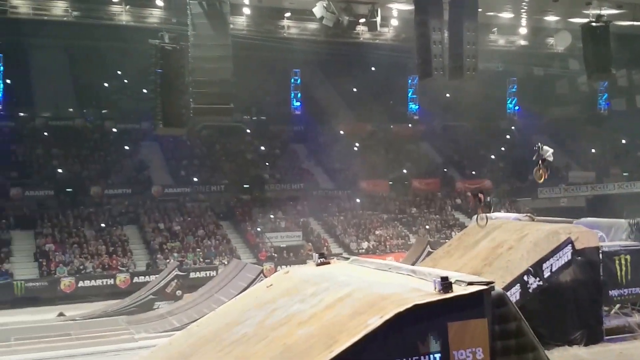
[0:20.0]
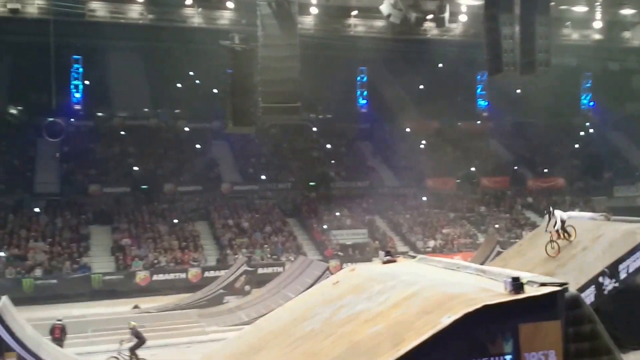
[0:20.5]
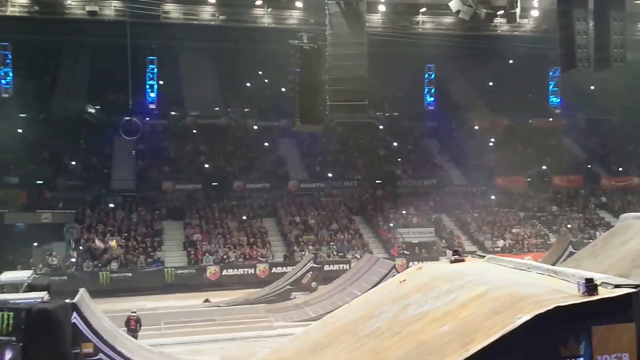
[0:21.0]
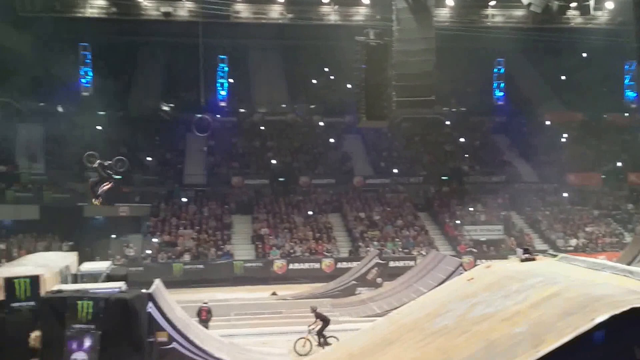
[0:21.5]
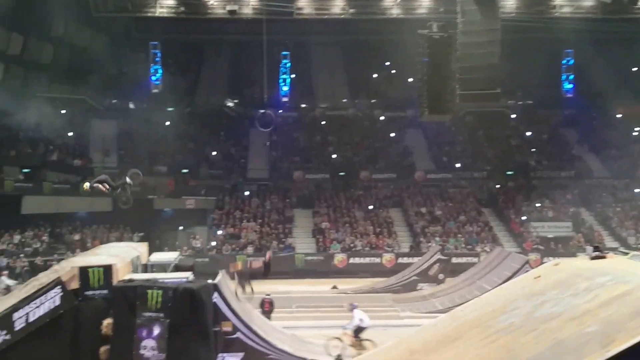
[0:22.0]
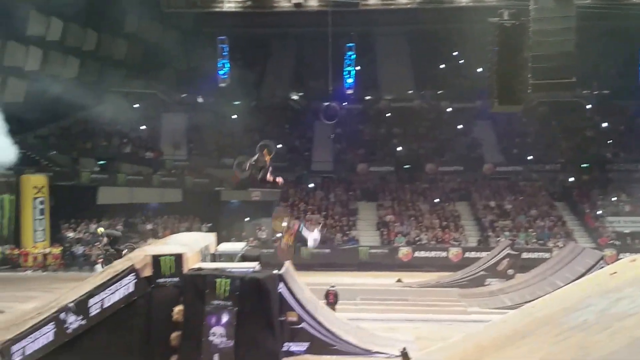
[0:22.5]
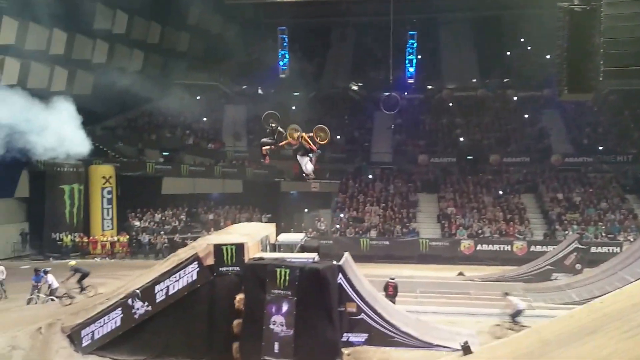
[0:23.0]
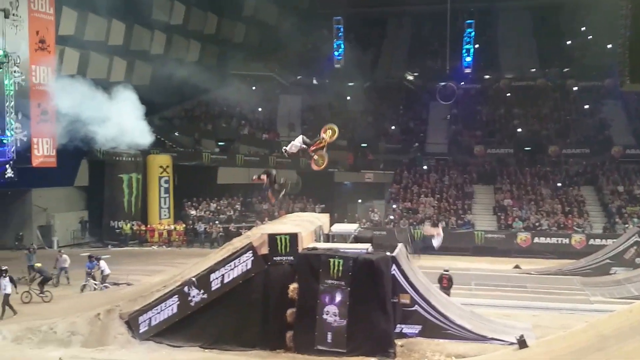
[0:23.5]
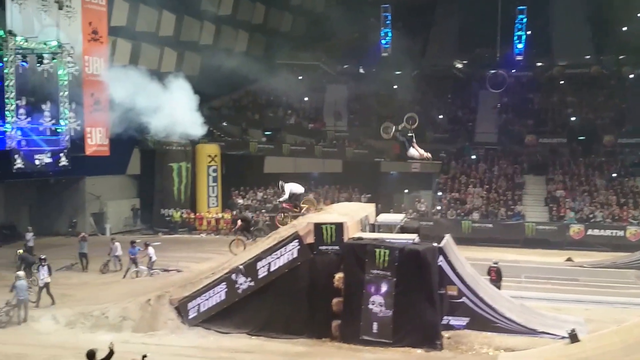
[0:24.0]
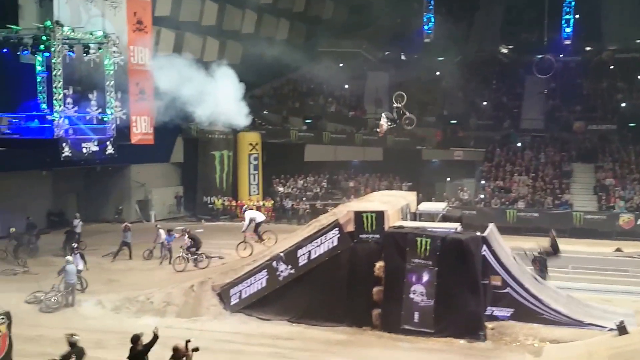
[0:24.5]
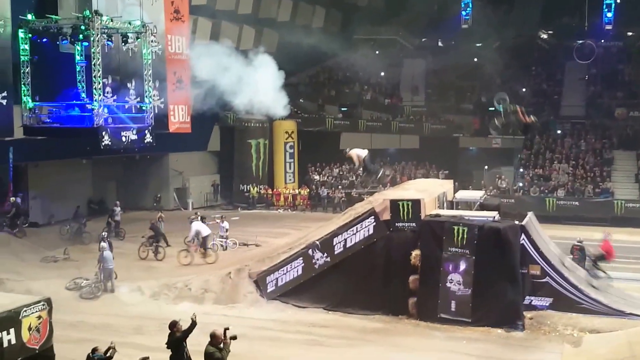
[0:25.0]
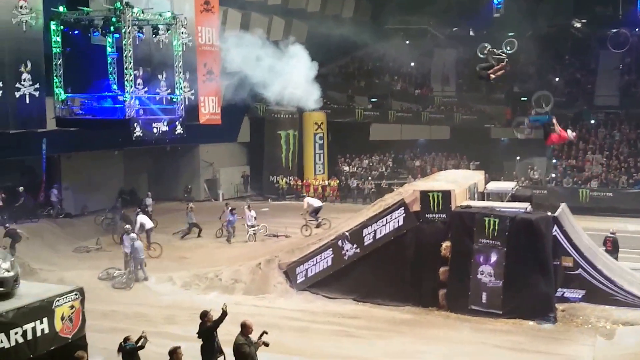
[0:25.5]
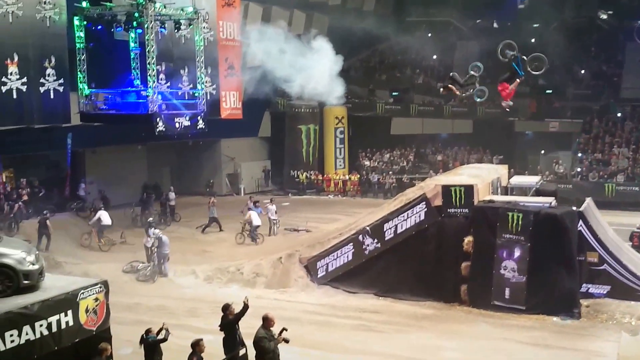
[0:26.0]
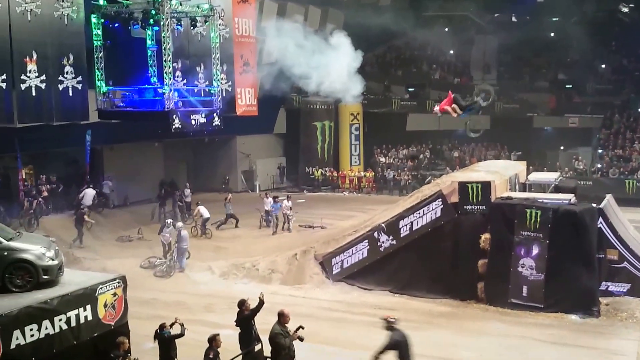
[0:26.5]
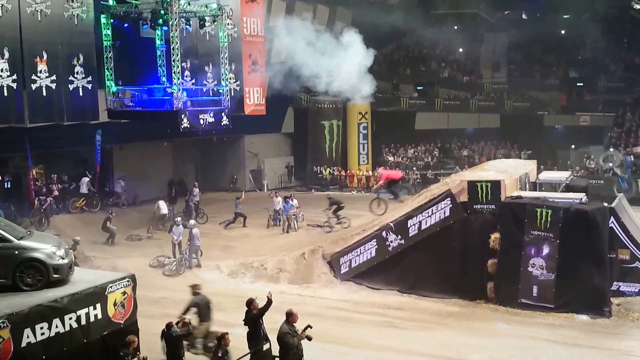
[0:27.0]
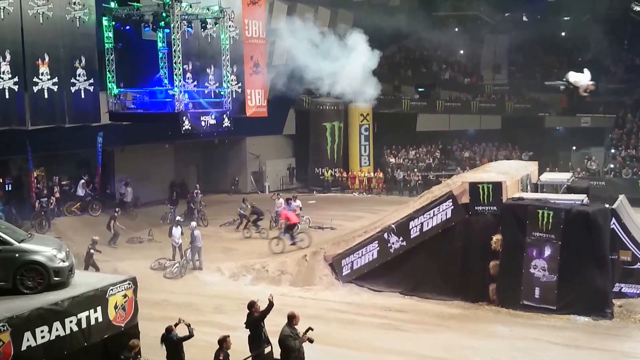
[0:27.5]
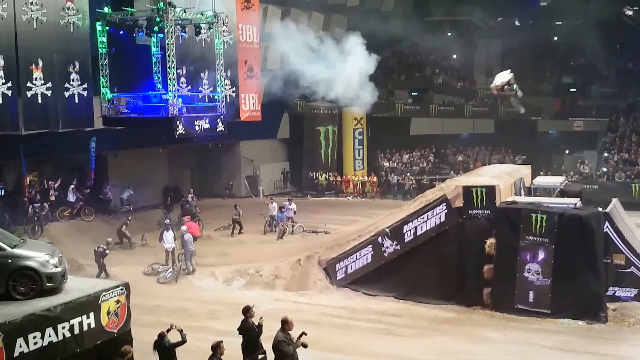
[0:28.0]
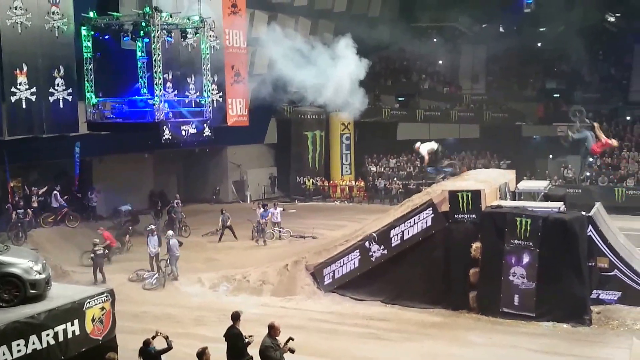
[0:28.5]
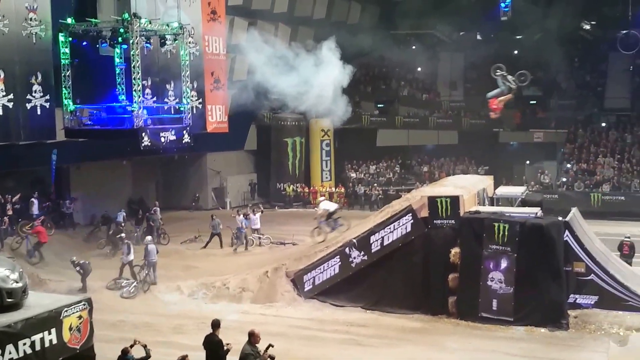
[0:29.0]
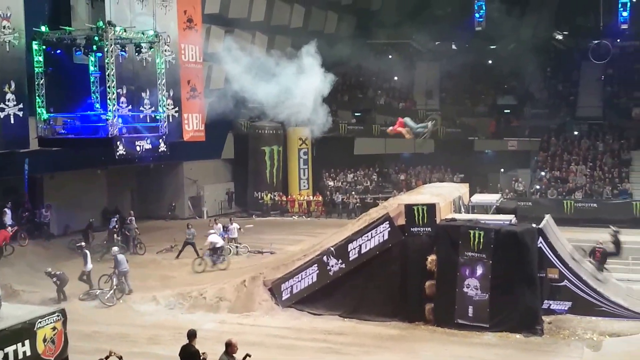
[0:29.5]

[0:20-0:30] The performance continues, and some of the riders are on bicycles, so a variety of vehicles, including bicycles, motorcycles and a snowmobile, go over the series of ramps. Each rider performs stunts and tricks, most often a backflip, along with other unidentified tricks. After going over the ramp and landing their trick, the riders generally pull off to the side and wait for the other riders in their group to go through before moving on to a different part of the show for the audience.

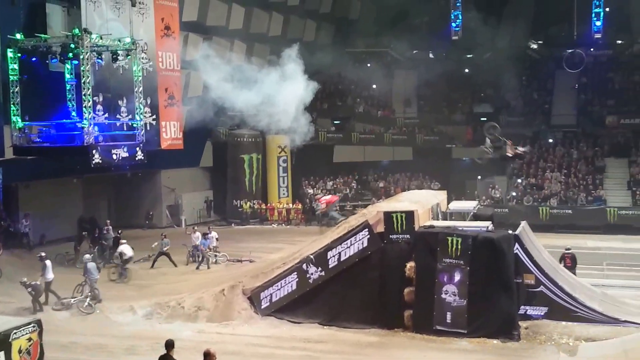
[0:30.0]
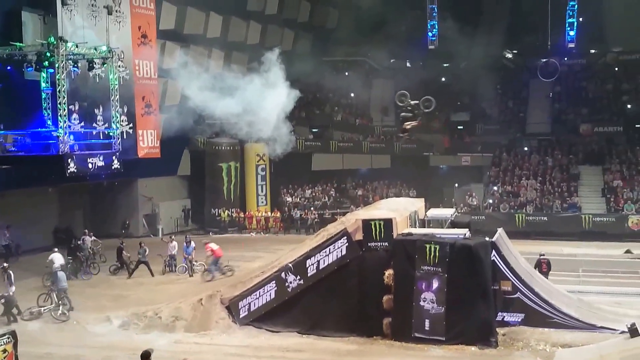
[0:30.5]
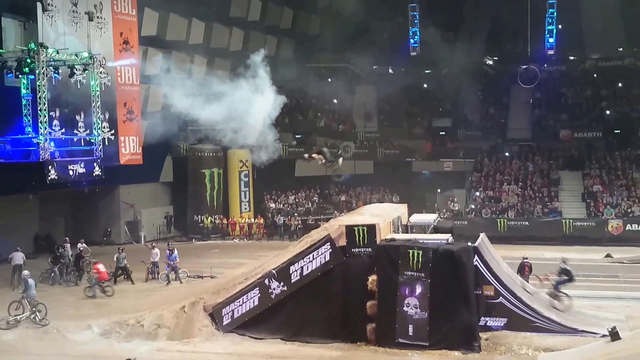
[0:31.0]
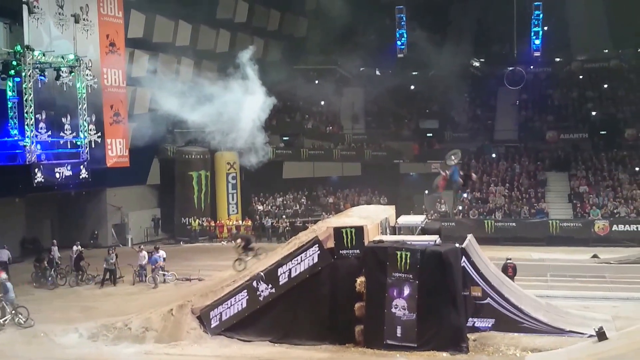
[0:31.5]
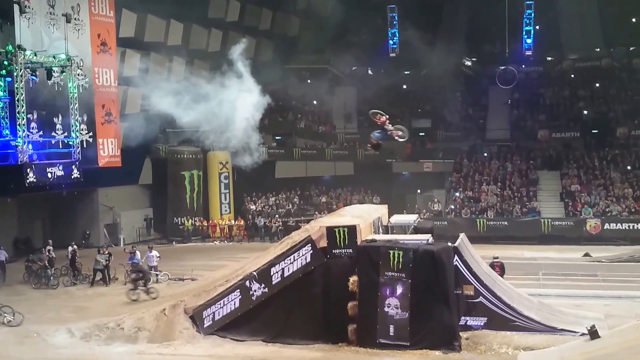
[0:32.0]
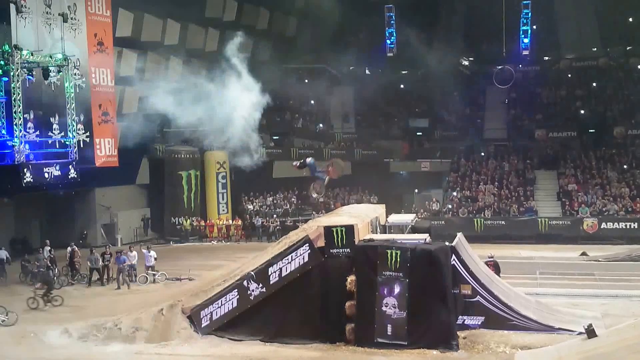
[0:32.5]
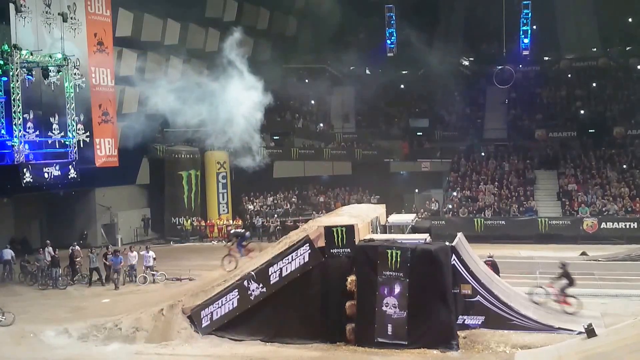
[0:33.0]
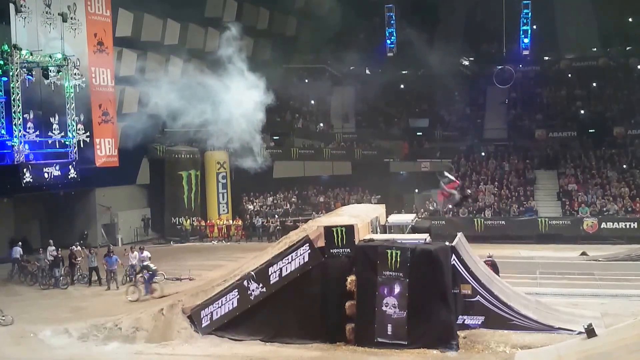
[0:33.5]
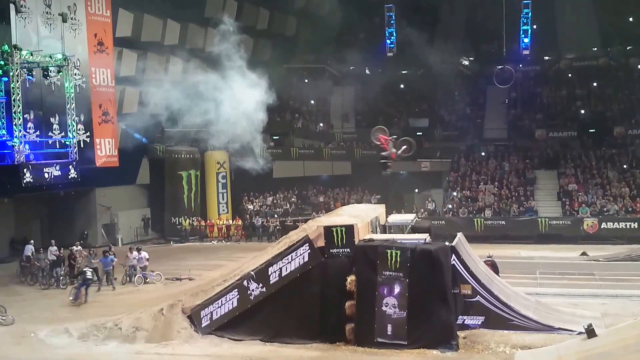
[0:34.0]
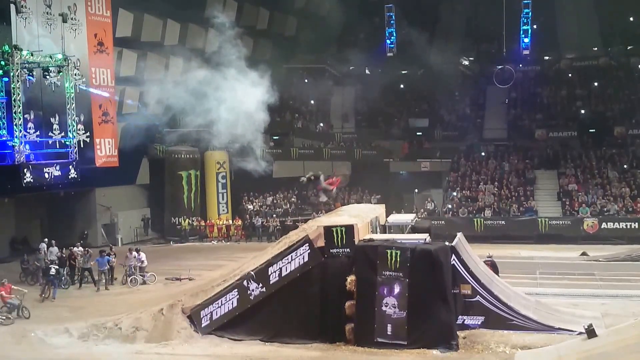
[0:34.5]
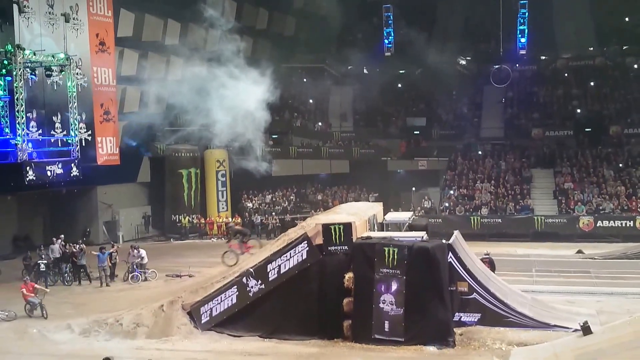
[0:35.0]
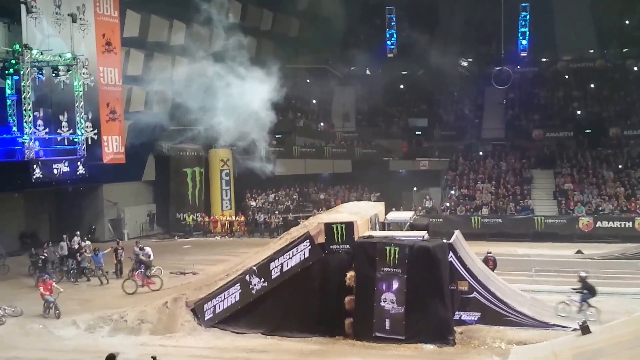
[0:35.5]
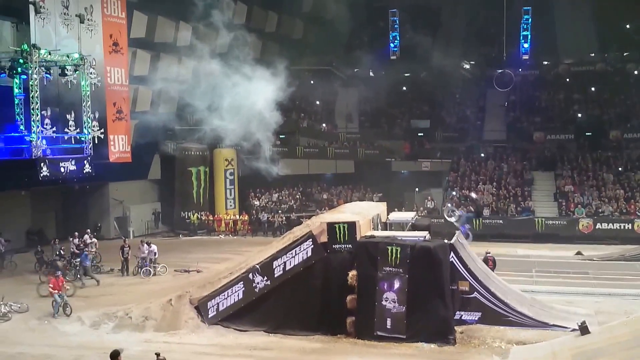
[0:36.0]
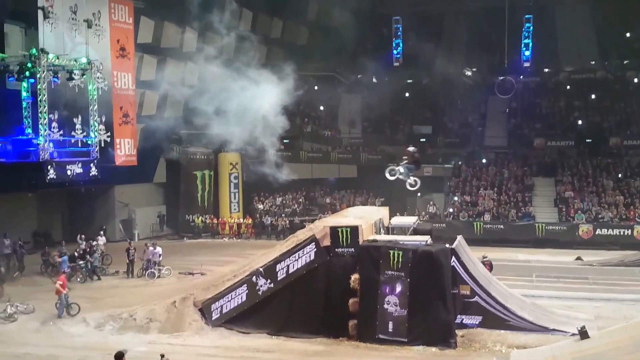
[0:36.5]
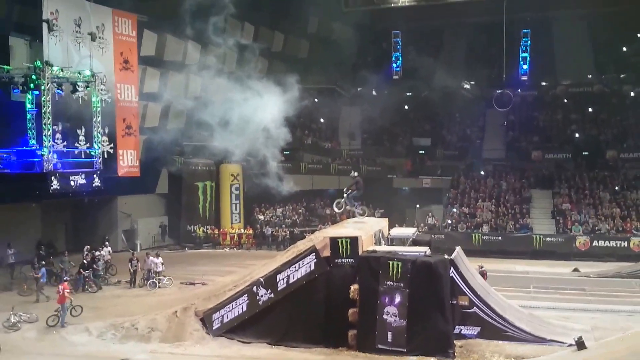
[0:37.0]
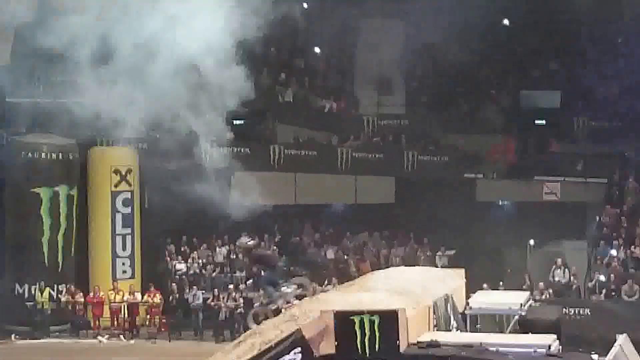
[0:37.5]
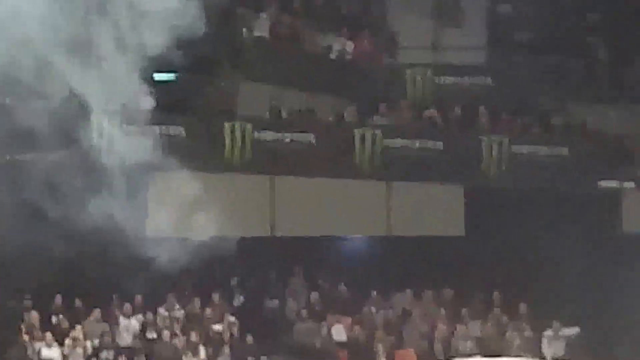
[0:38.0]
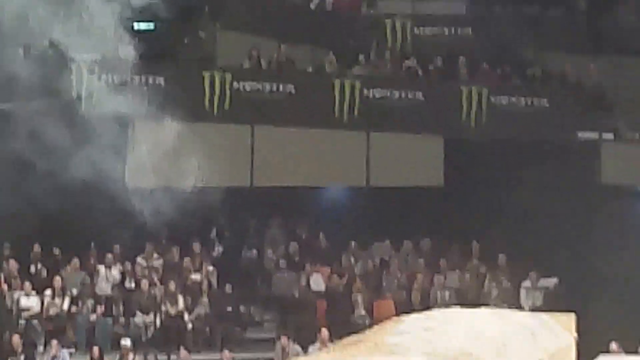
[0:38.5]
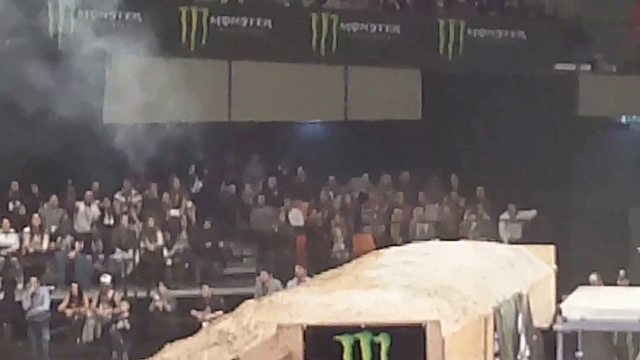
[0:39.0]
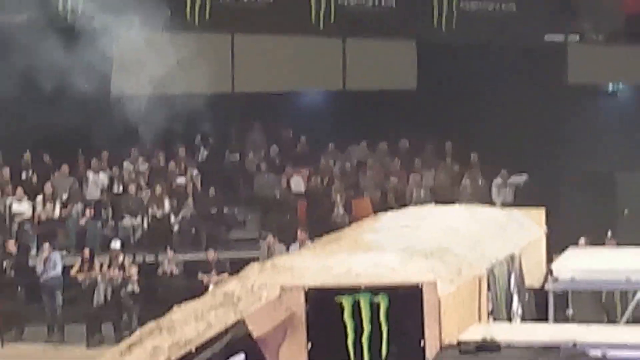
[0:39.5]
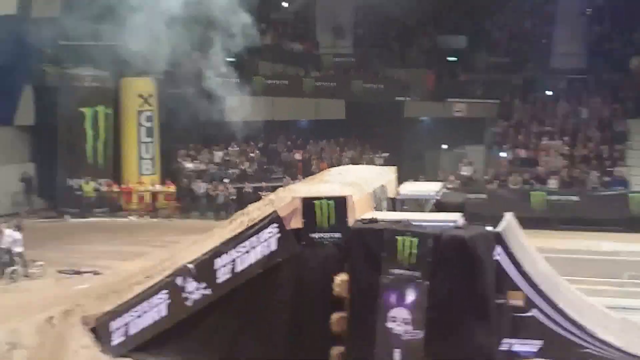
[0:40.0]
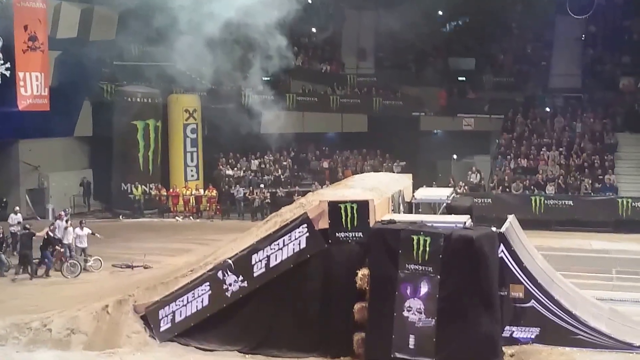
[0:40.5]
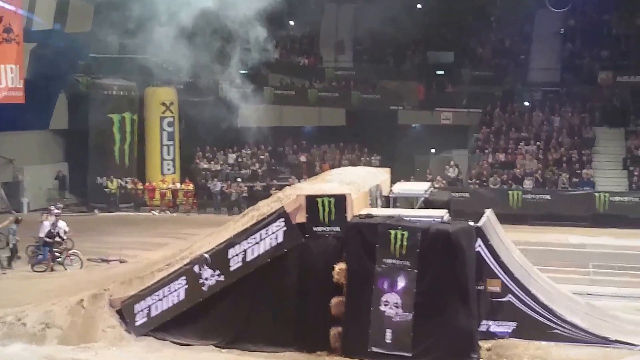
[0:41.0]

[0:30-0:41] The bikes keep going over the ramps doing backflips. The last bike to go over in this first part does no trick; it simply goes over and lands. At the end, smoke starts coming out of some stage machinery, equipment that is apparently for a light and smoke show and is likely choreographed to go along with the riders' performance. Various people support the riders as they come off, likely to help with their safety.